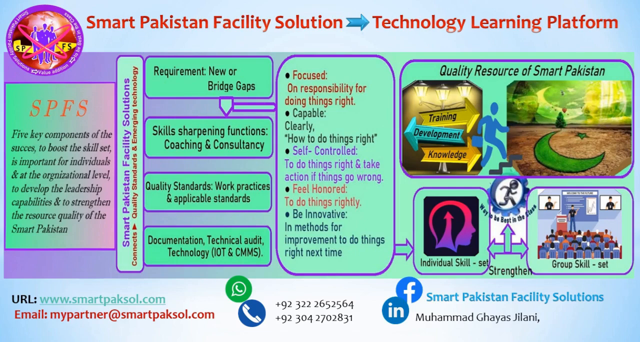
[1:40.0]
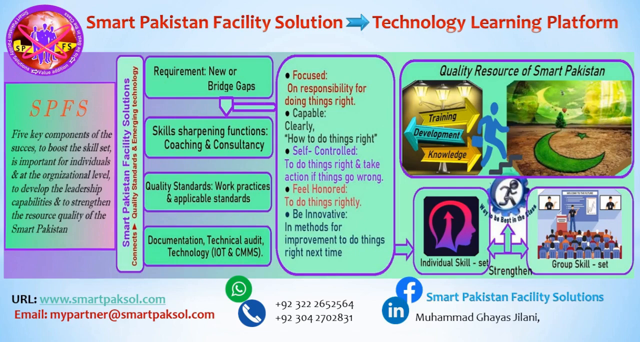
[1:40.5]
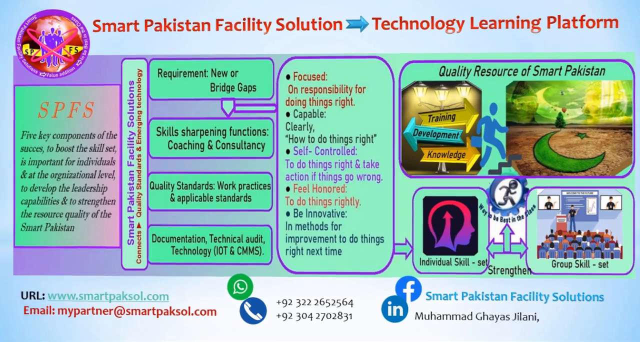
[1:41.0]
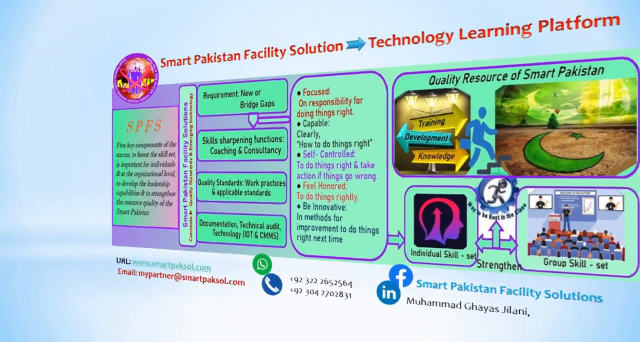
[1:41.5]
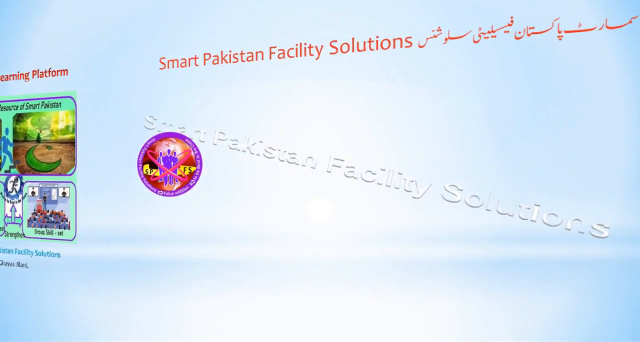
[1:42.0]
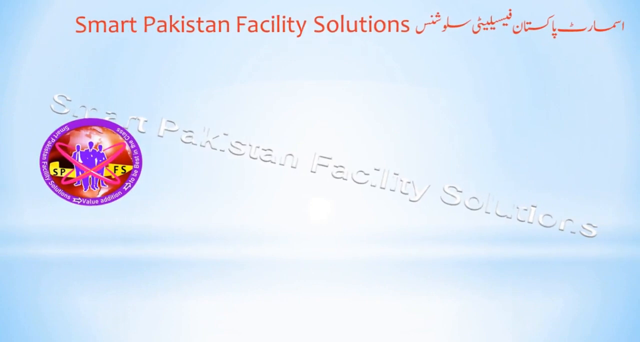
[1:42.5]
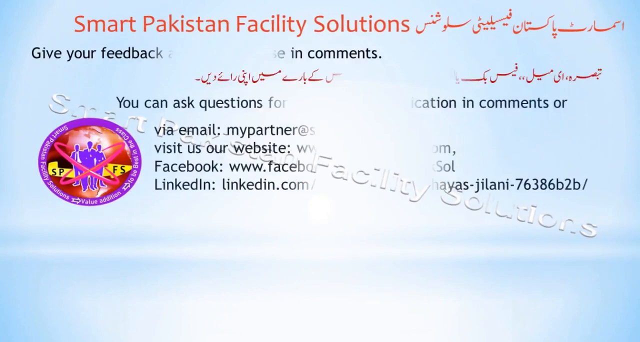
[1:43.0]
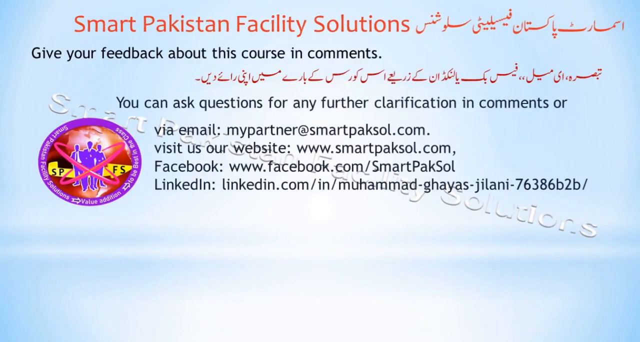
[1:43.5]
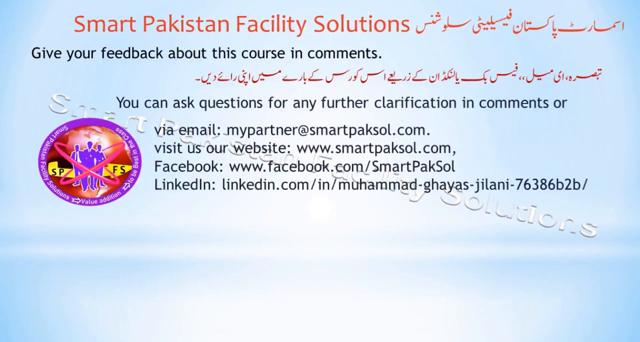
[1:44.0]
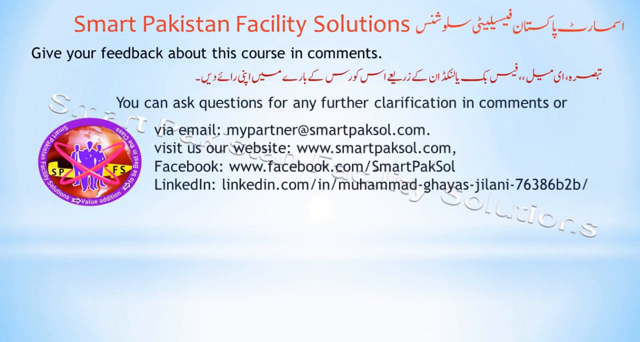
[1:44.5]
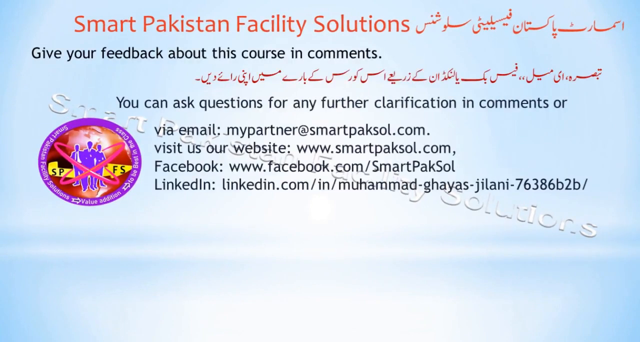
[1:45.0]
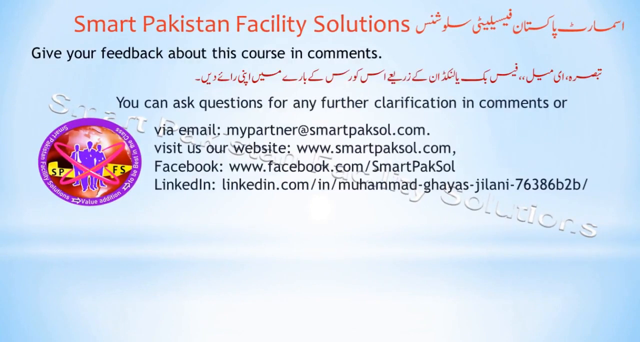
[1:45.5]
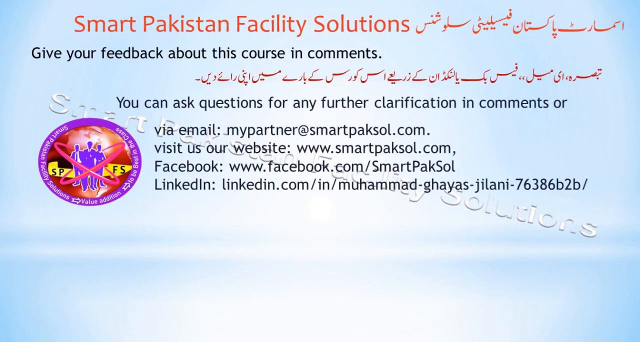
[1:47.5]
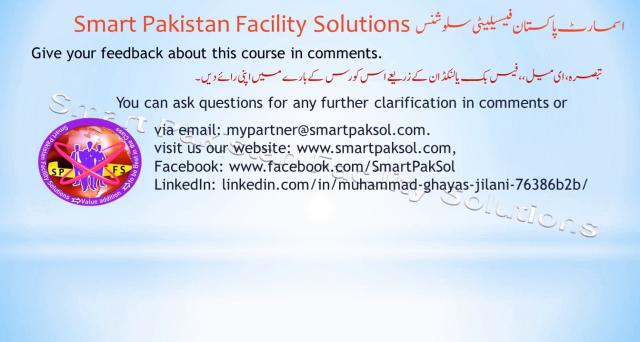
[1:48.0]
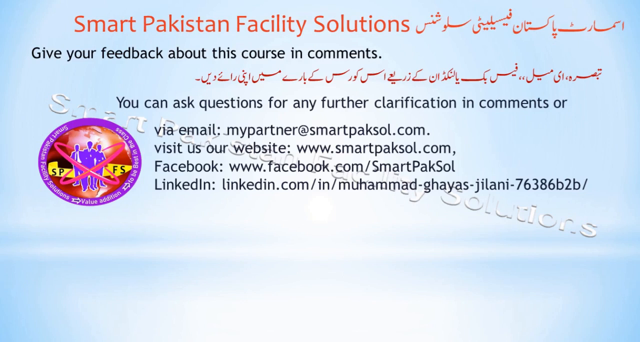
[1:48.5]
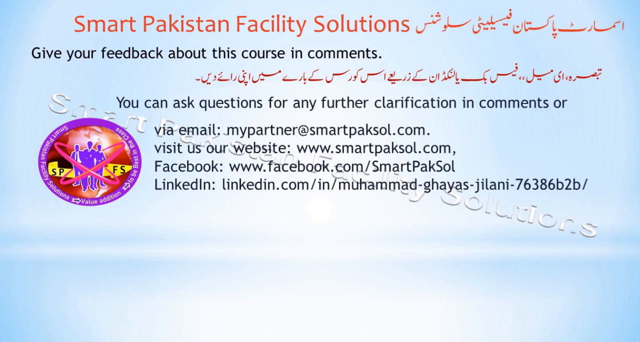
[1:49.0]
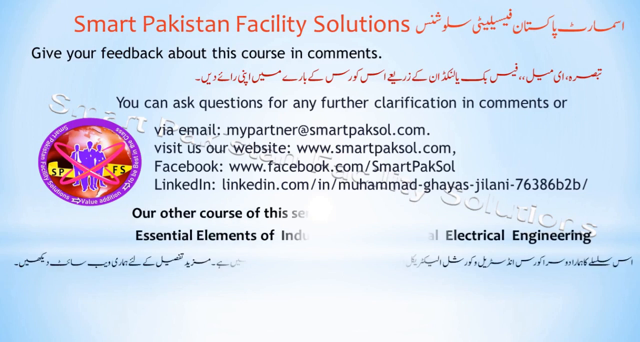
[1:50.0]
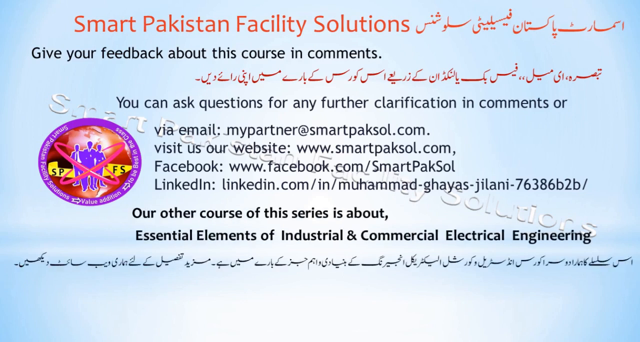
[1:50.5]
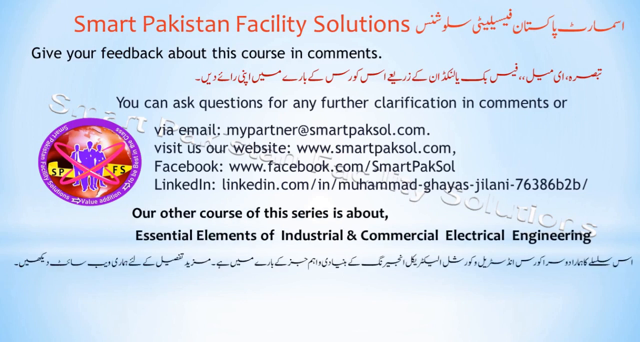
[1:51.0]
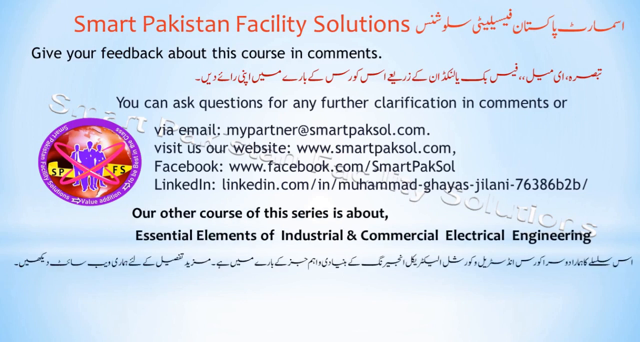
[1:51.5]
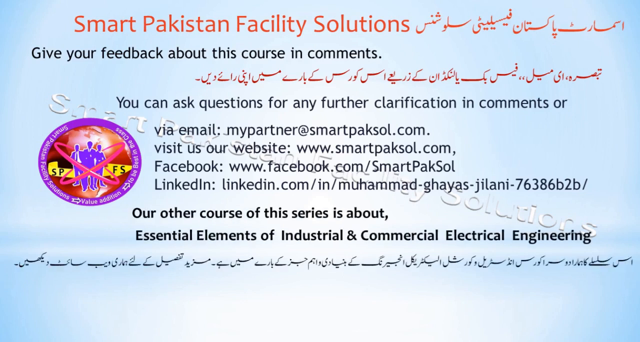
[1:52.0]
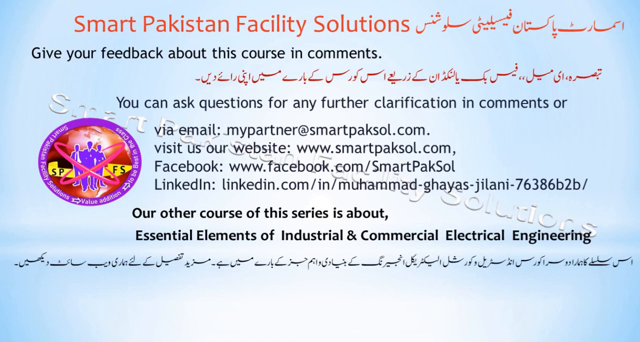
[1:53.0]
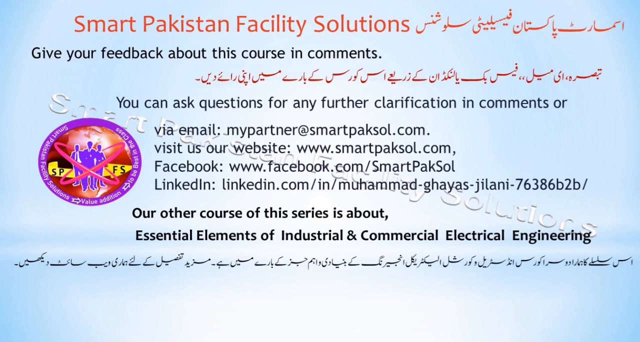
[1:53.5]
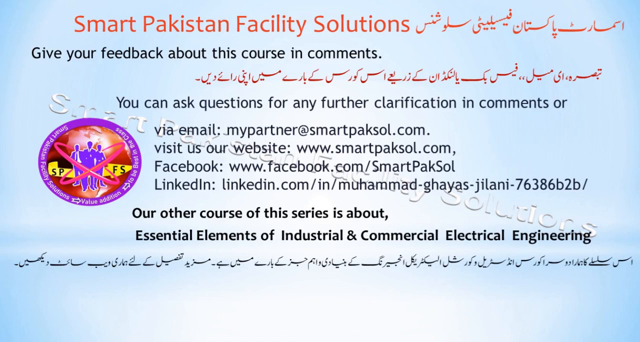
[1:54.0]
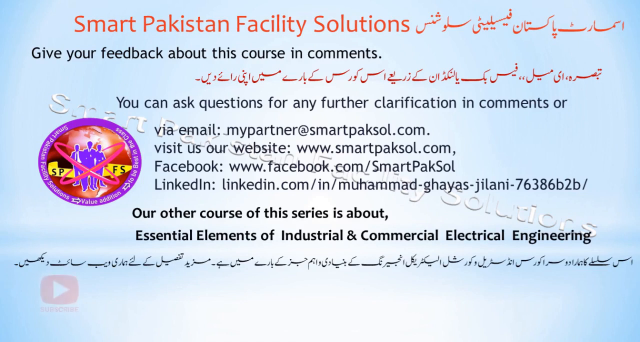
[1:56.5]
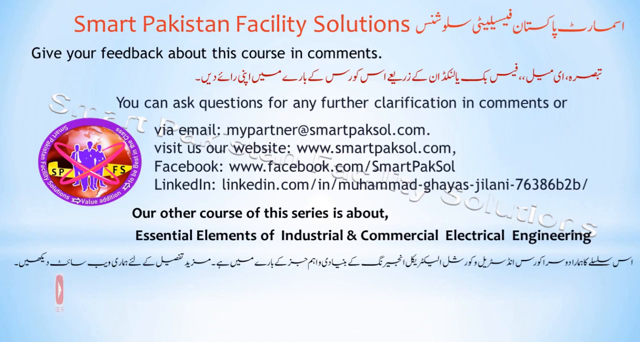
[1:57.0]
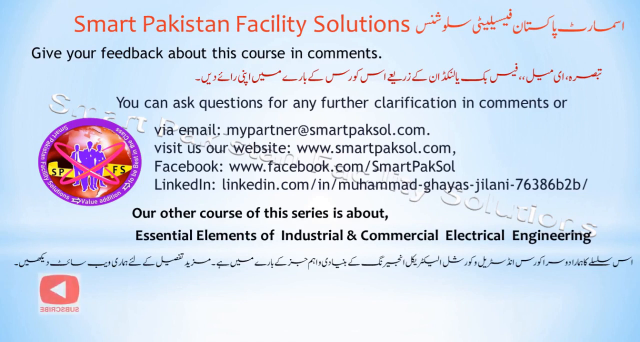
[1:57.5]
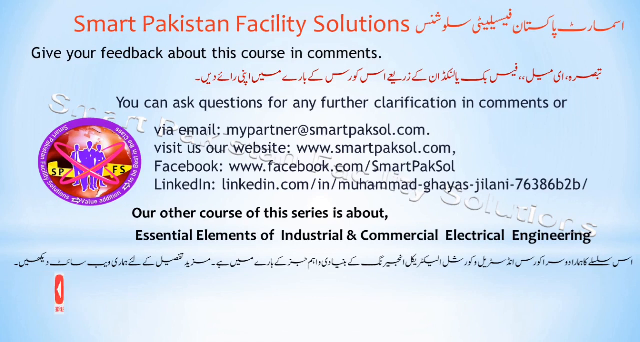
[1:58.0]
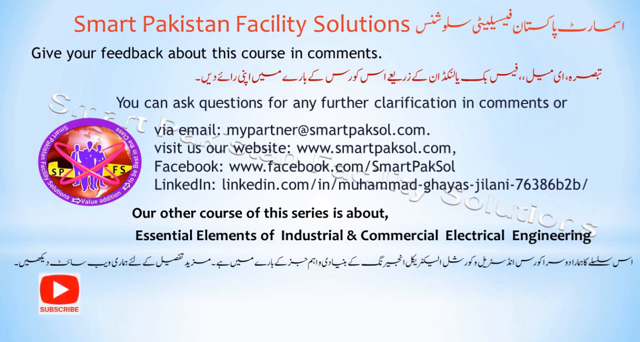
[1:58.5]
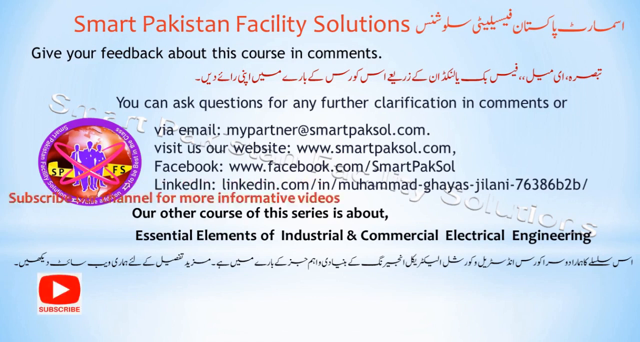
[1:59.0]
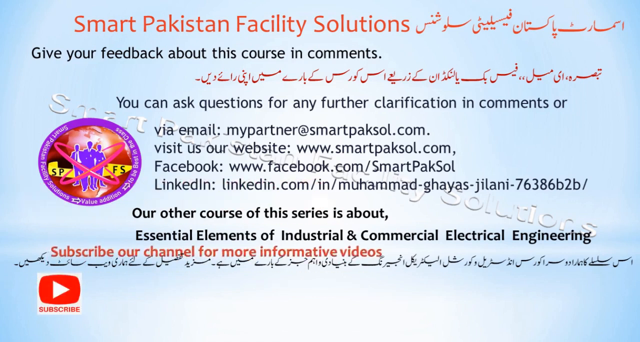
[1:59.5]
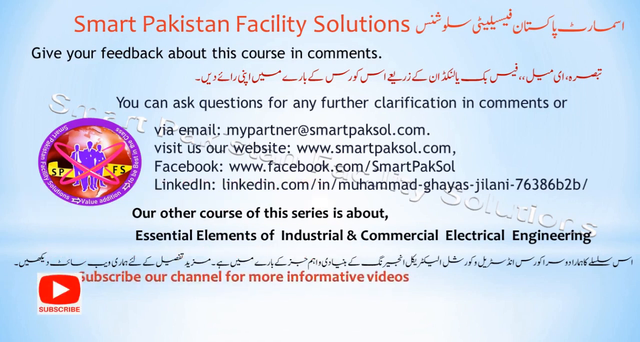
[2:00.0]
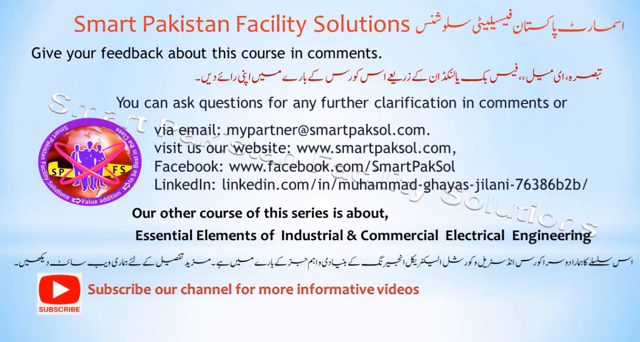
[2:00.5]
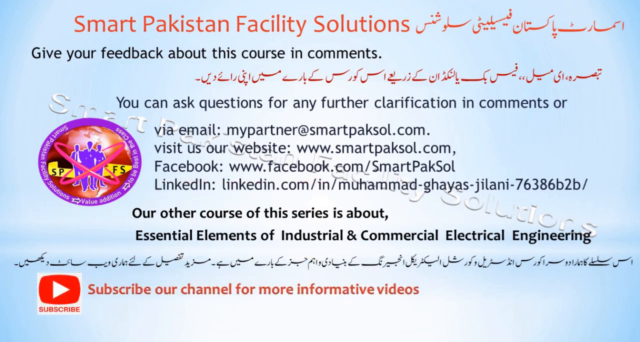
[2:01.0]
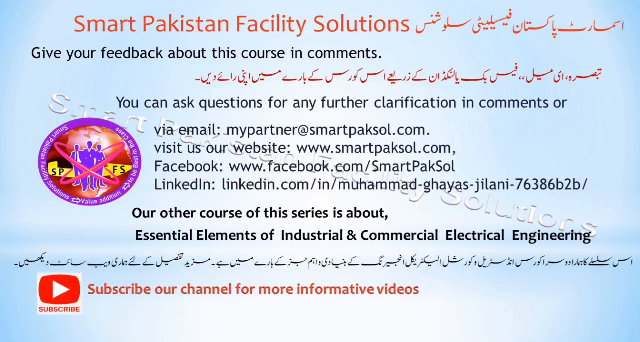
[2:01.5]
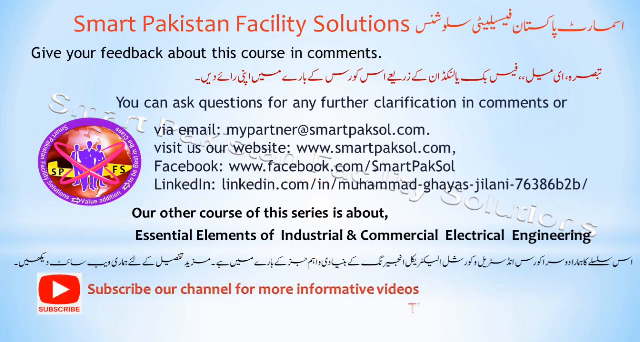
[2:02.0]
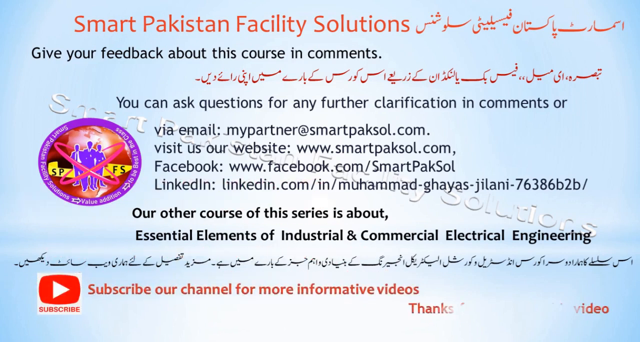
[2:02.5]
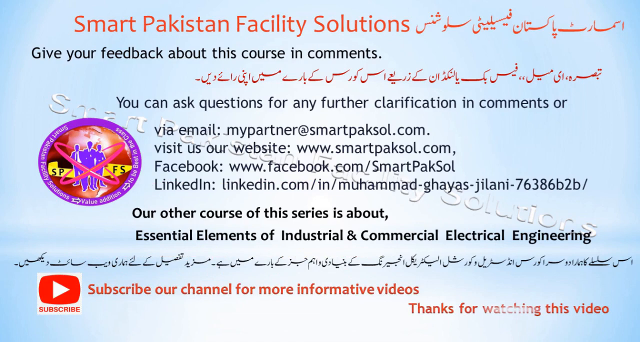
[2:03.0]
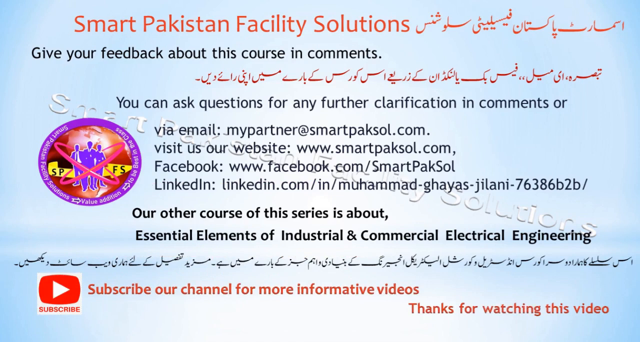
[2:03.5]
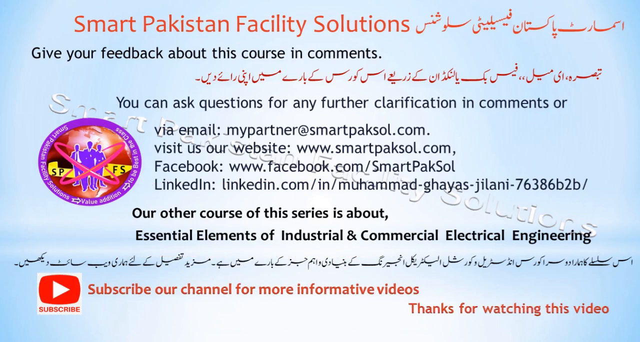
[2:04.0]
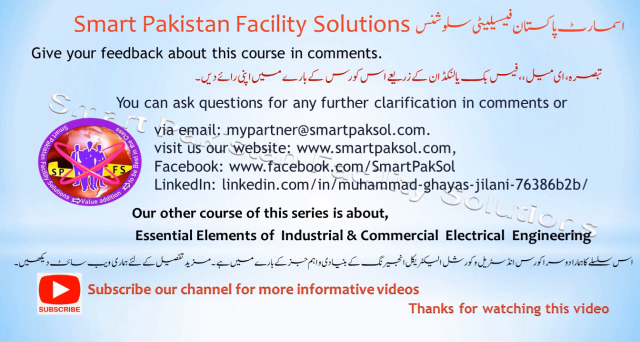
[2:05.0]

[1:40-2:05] A new slide shows different contact information, this time without social media logos; the sites are typed out next to the information and links. The top of the slide is titled "Smart Pakistan Facility Solutions" with Hindu writing next to it. Underneath, black text says "give your feedback about this course in comments", with more writing in Hindu. Above the contact information it says "you can ask questions for any further clarification in comments or via these sites". The company logo is on the left side. New text then appears saying "our other course of this series is about essential elements of industrial and commercial electrical engineering". A YouTube subscribe button appears at the bottom of the screen with the words "subscribe our channel for more informative videos. Thanks for watching this video."